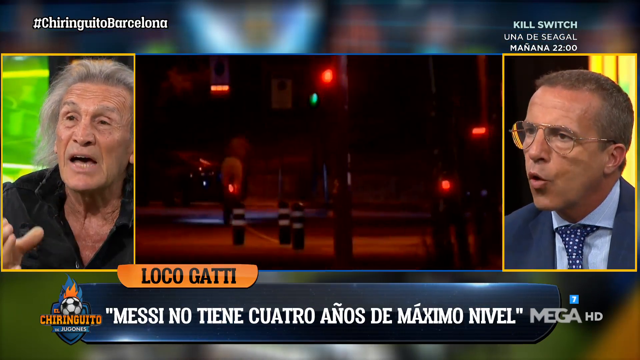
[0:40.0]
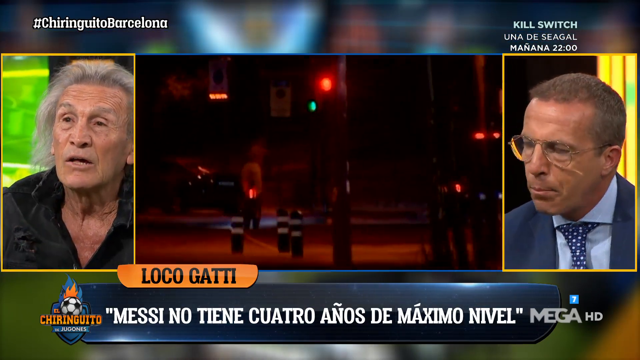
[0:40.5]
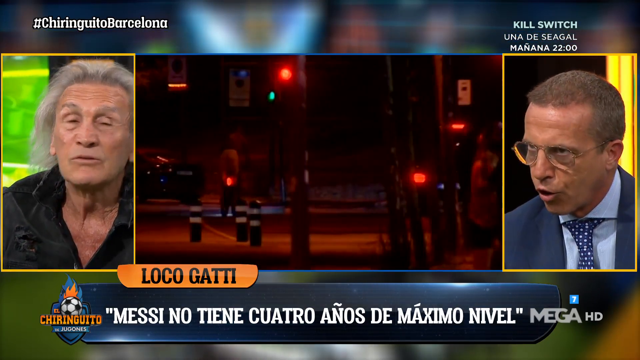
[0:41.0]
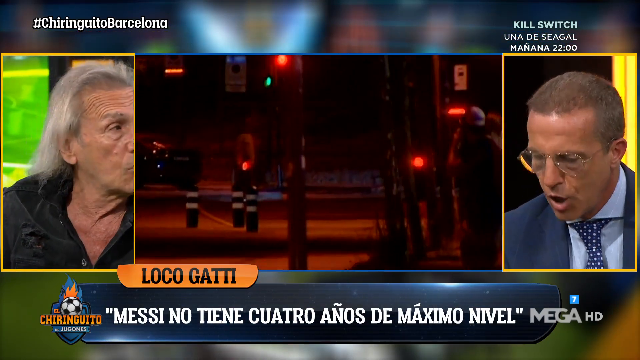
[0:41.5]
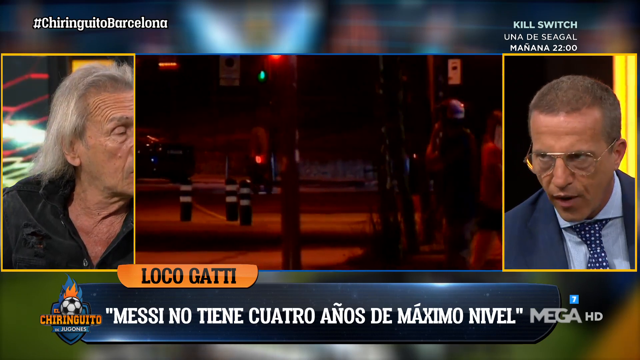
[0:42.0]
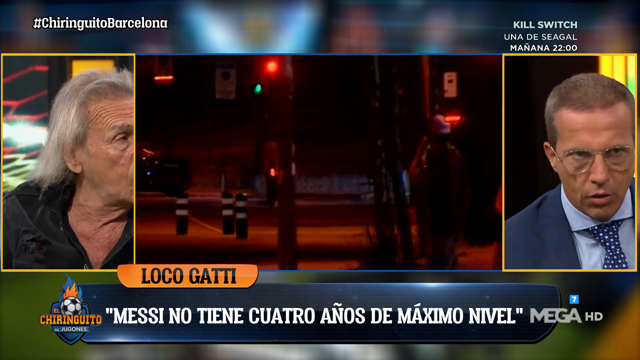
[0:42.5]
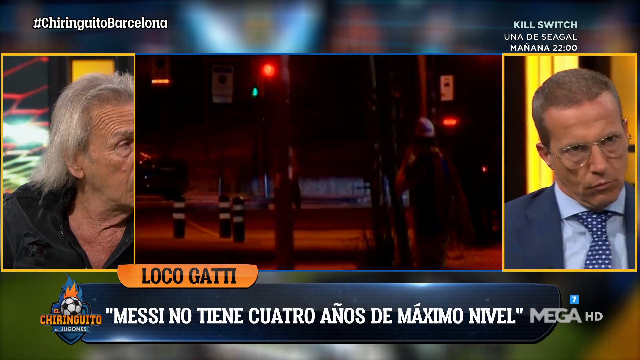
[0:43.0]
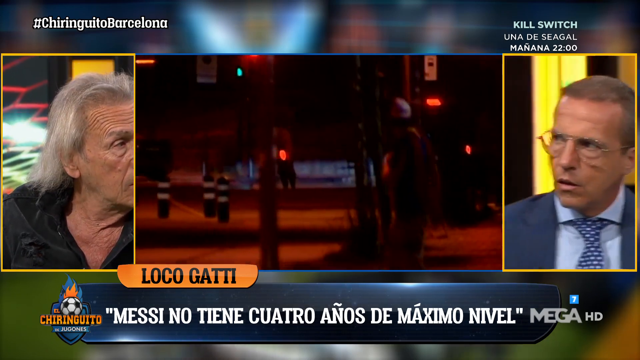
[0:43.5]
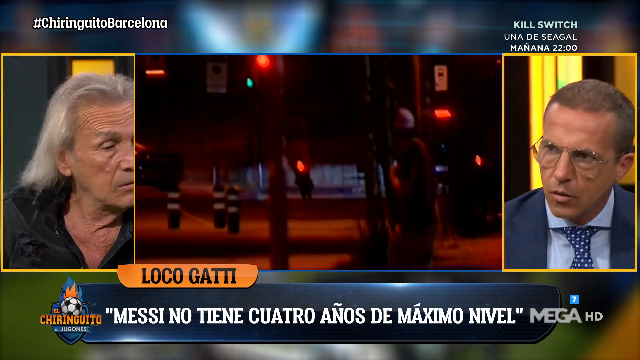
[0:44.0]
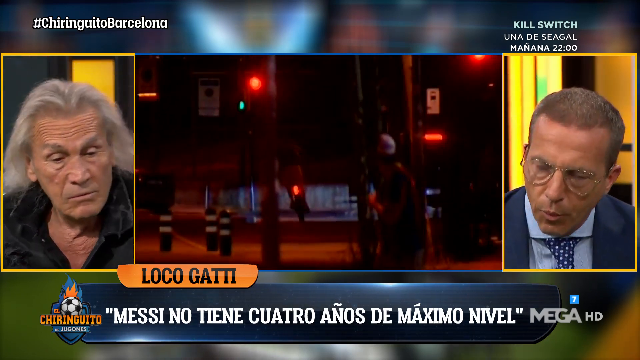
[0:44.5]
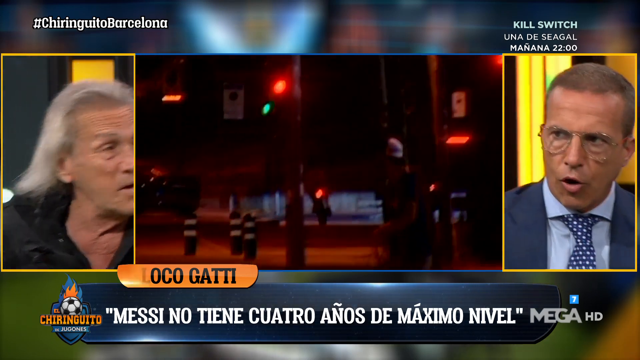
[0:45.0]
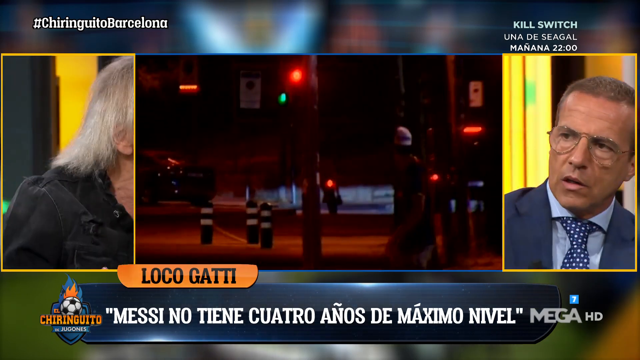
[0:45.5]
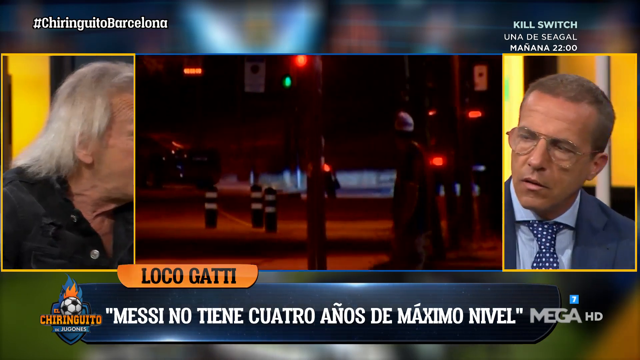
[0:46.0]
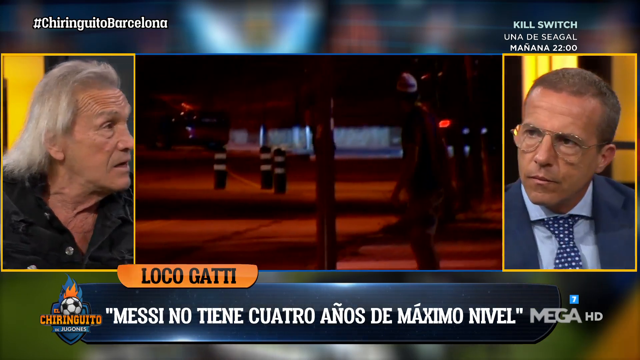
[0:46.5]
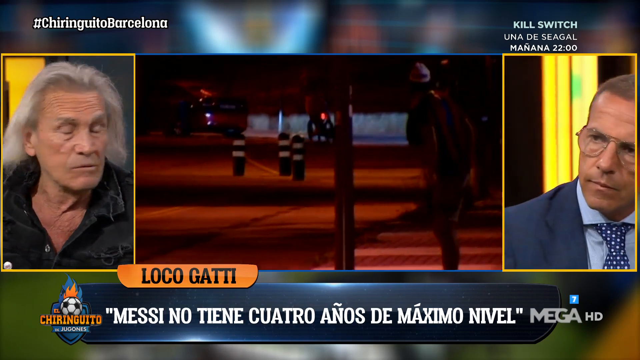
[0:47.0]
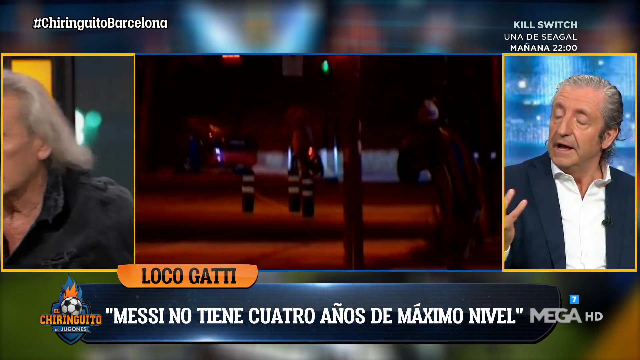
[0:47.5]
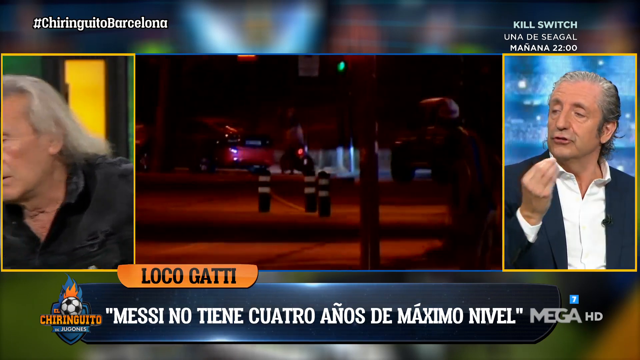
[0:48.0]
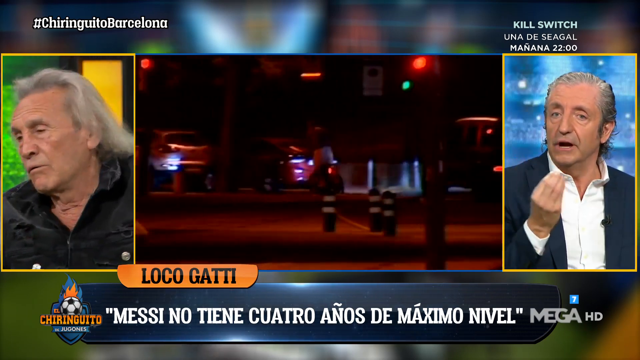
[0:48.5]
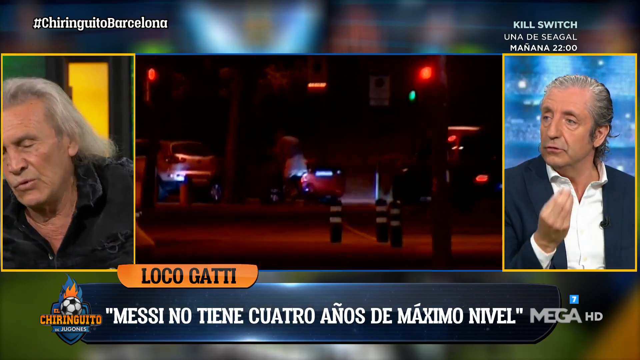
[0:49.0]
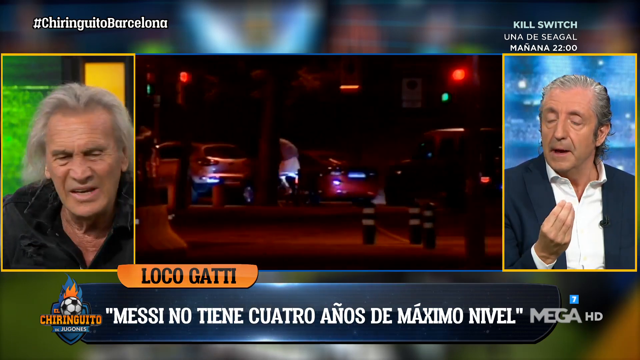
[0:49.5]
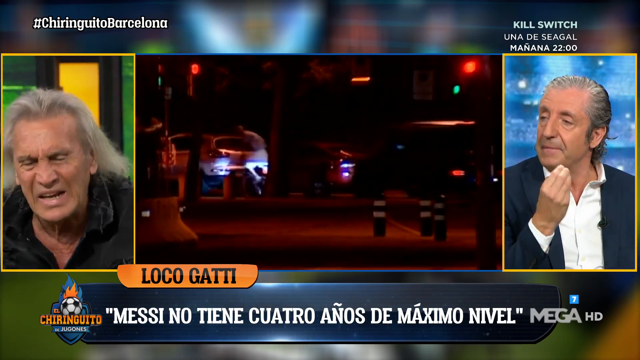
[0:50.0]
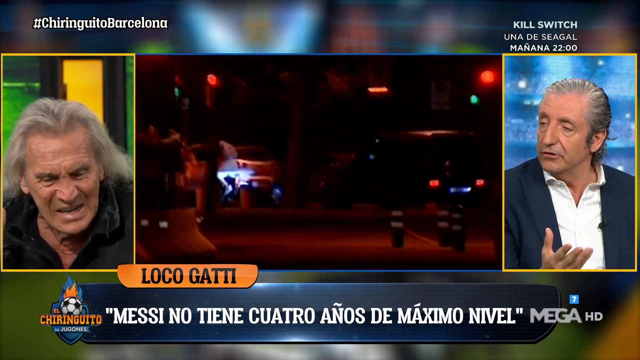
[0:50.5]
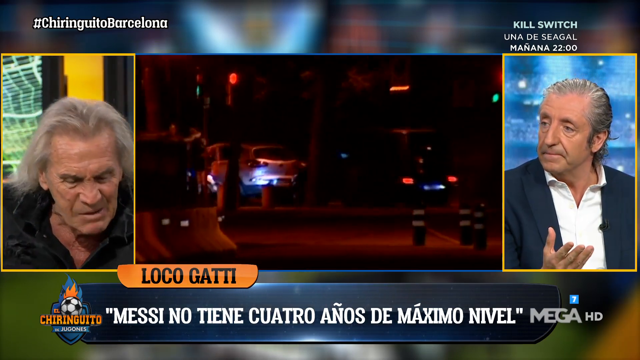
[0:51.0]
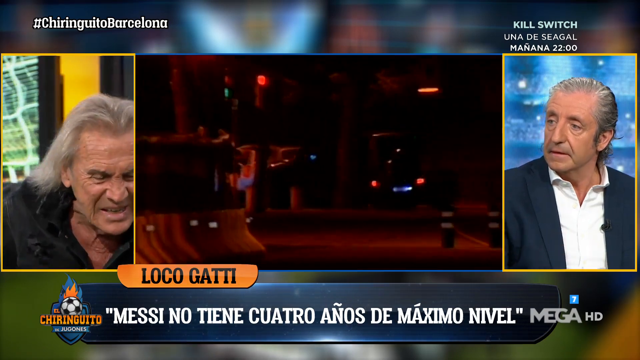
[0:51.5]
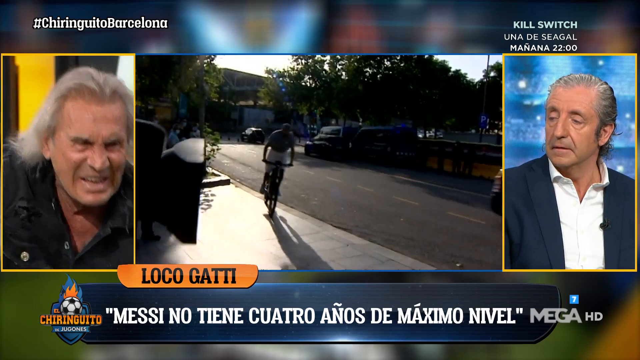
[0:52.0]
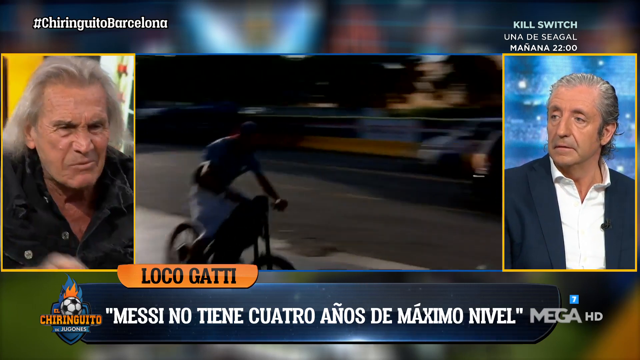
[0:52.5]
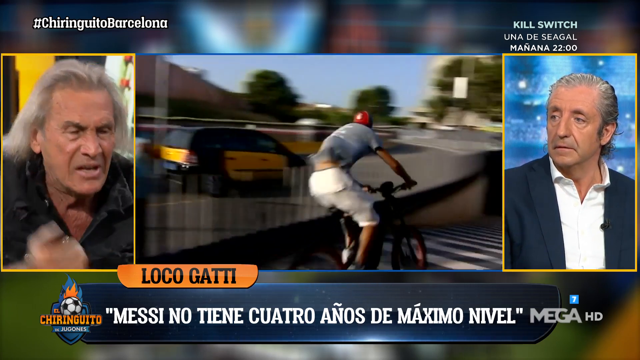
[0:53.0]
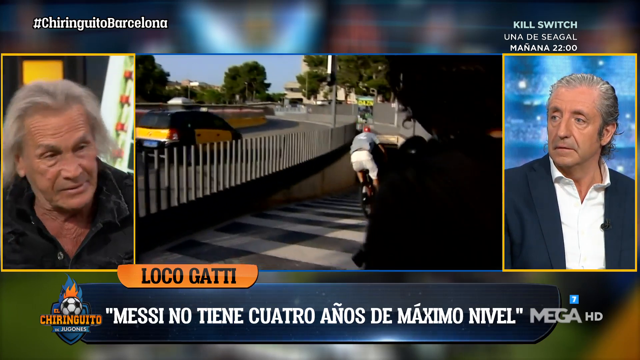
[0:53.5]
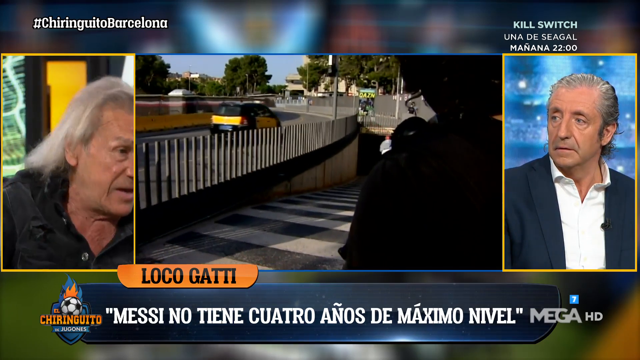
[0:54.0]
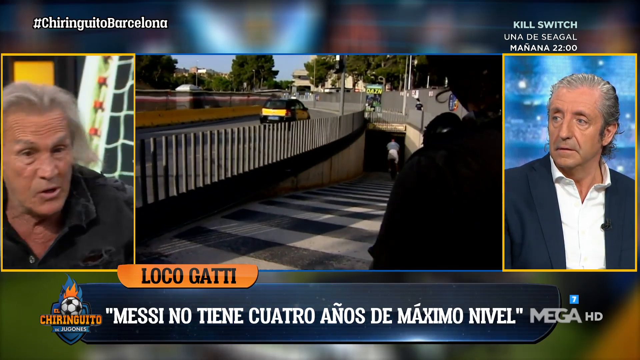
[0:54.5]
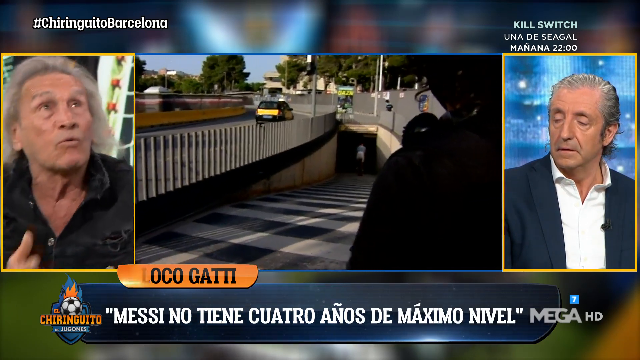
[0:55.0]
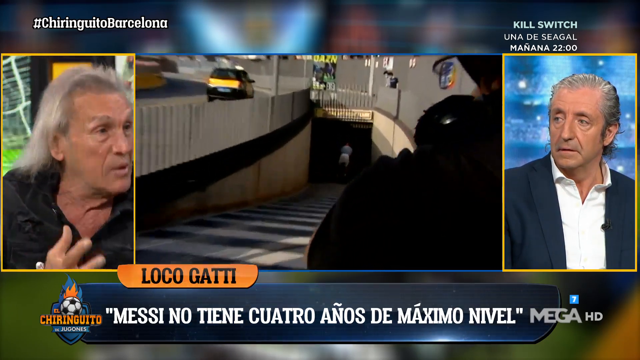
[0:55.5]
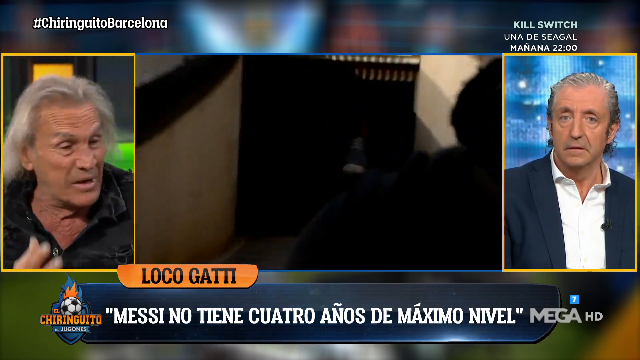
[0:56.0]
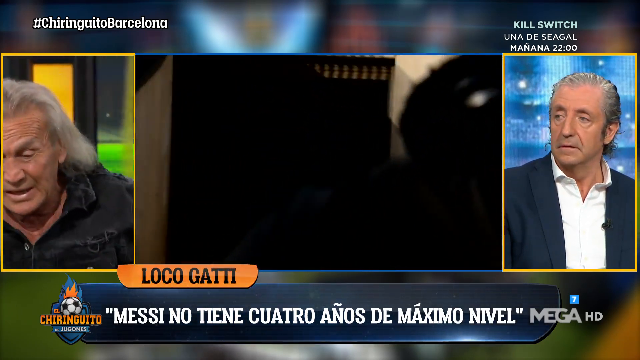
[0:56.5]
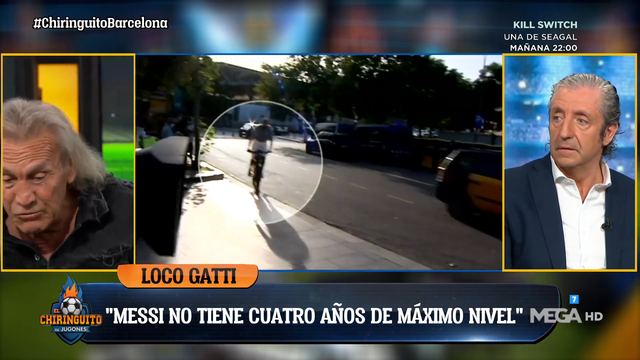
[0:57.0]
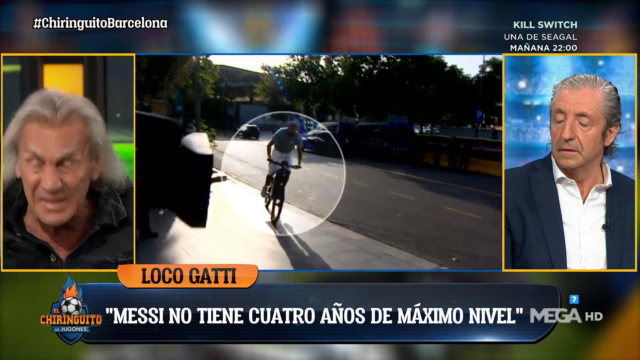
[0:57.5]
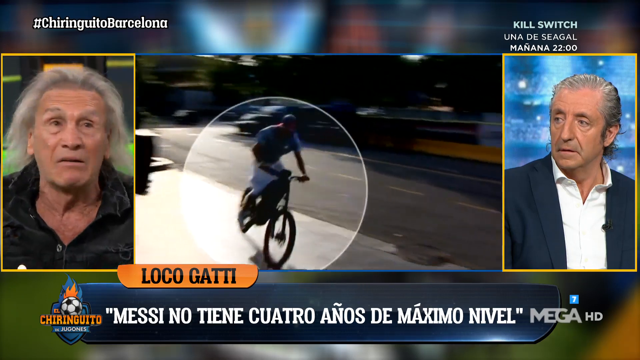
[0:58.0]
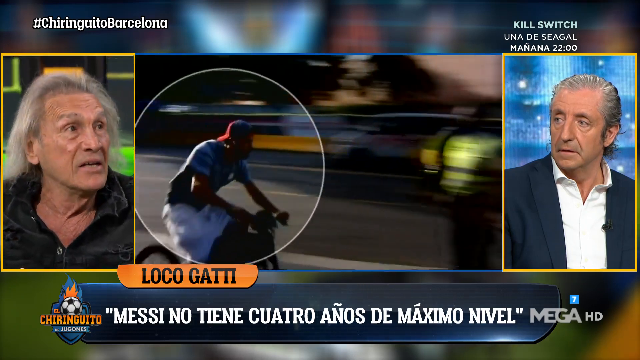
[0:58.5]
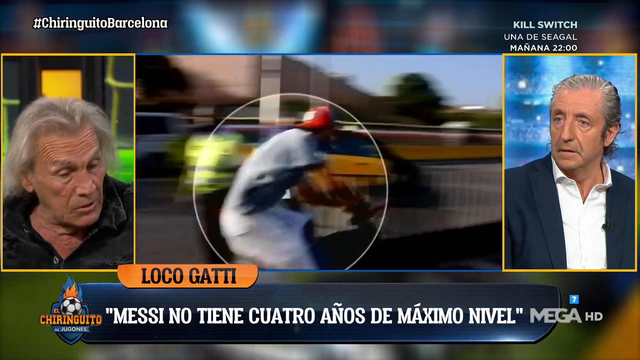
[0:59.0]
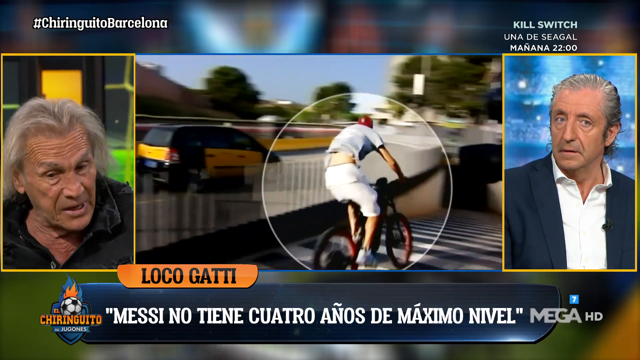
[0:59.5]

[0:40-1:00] The news report shows a split screen with a man on the right, a man on the left, and video in the middle. Both men are talking, their mouths moving and their faces expressive, and they move around a lot on the screen as if upset and having a very animated conversation. The middle video shows a bicycle rider riding down a ramp and into a tunnel, and also riding down a city street, the bicycle's taillight kind of disappearing into the distance with a black SUV following it. The next scene shows the bicycle riding down a city street, then down a ramp that goes underneath the street, like a pedestrian crosswalk ramp that goes down under the street into a tunnel instead of over it. As the rider goes down the ramp, he disappears into the tunnel entrance.